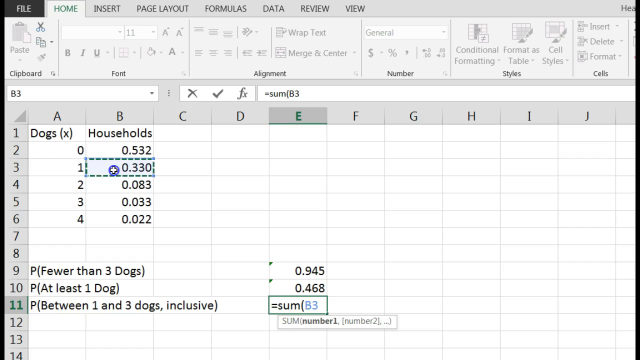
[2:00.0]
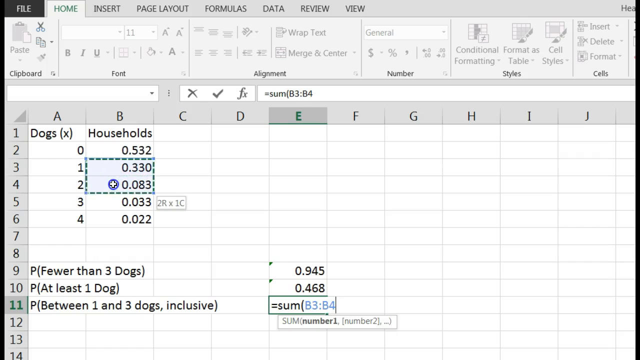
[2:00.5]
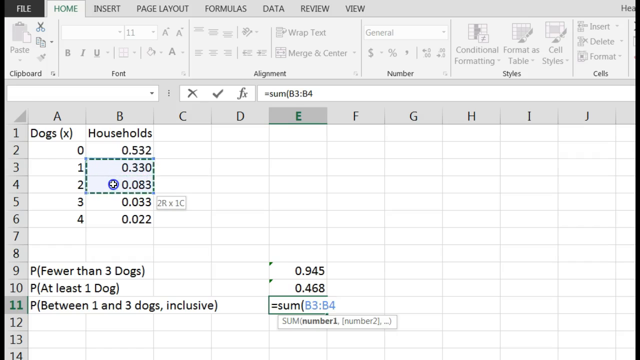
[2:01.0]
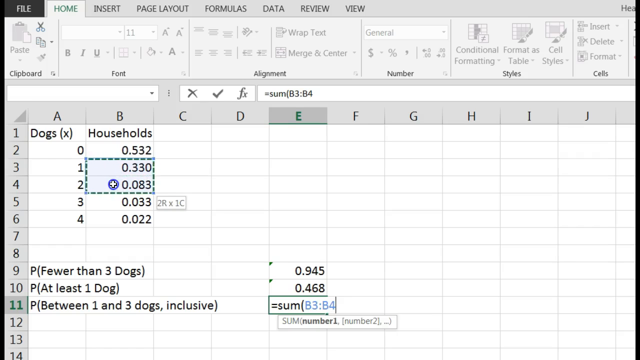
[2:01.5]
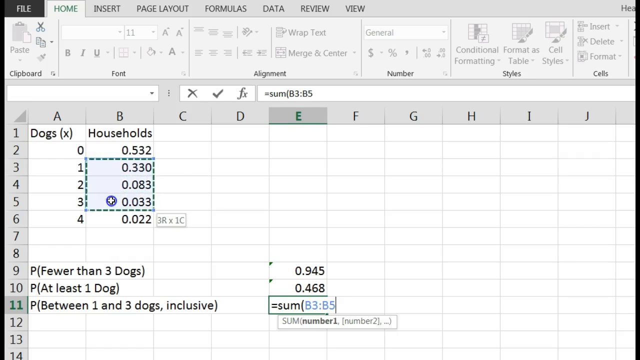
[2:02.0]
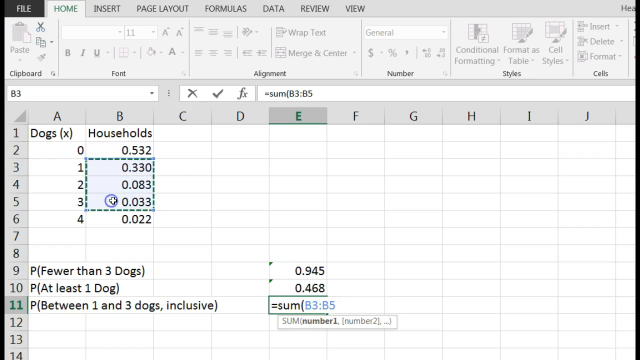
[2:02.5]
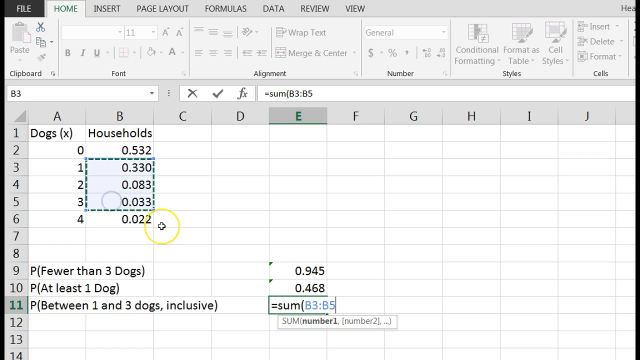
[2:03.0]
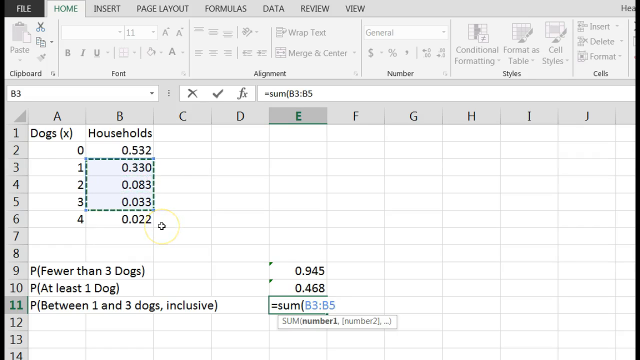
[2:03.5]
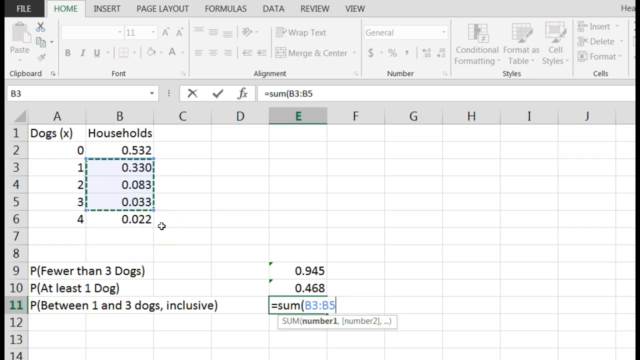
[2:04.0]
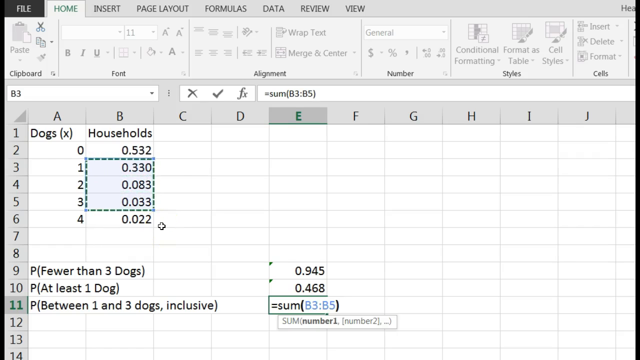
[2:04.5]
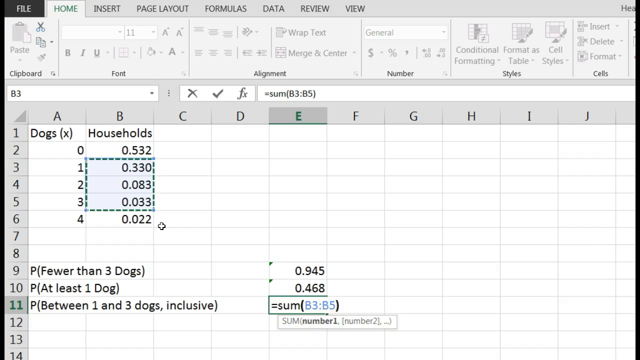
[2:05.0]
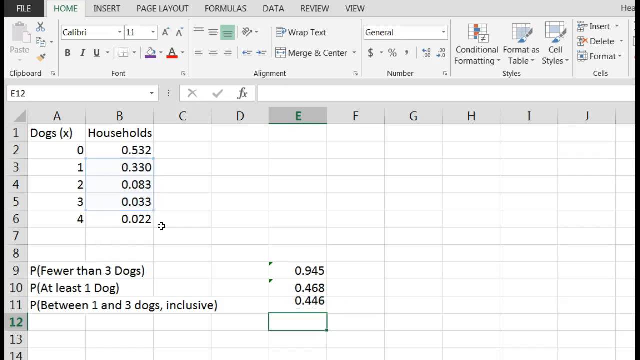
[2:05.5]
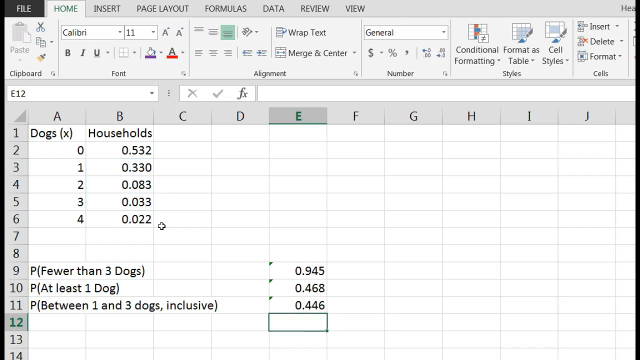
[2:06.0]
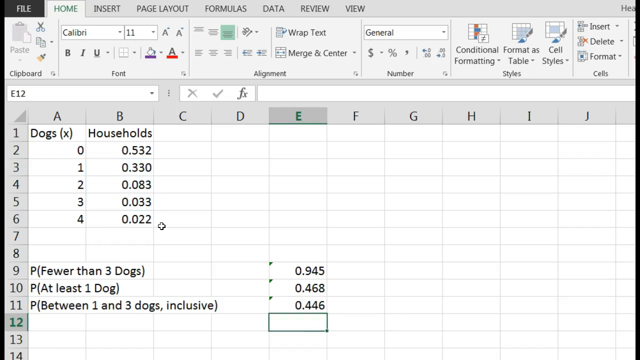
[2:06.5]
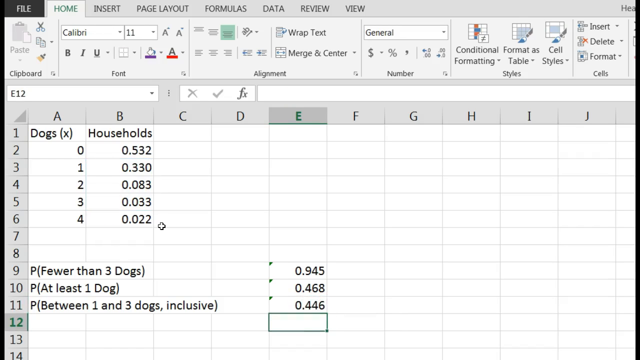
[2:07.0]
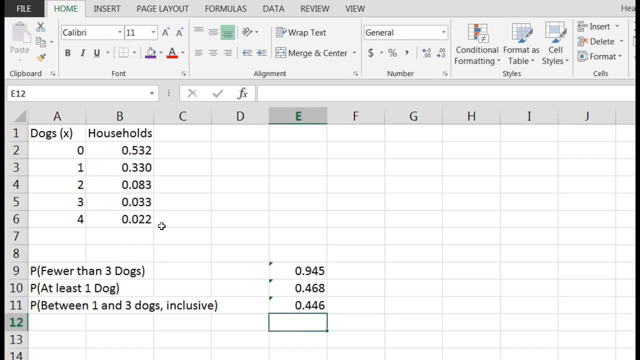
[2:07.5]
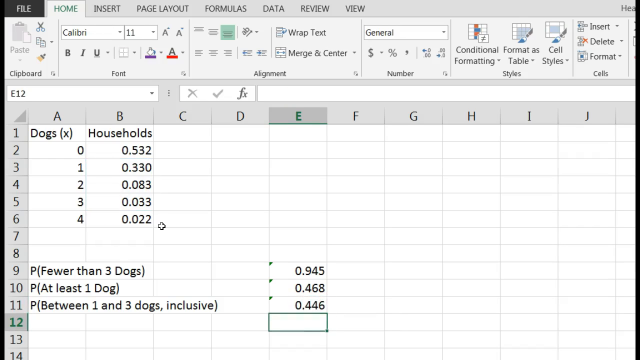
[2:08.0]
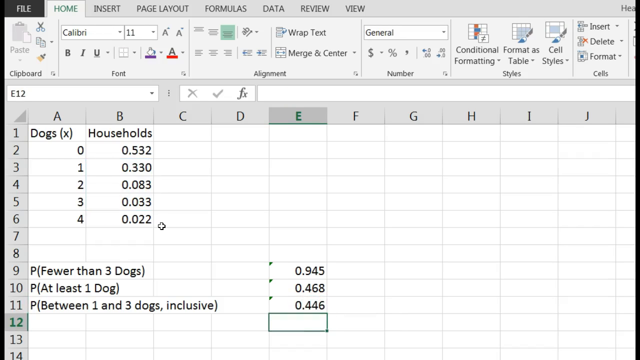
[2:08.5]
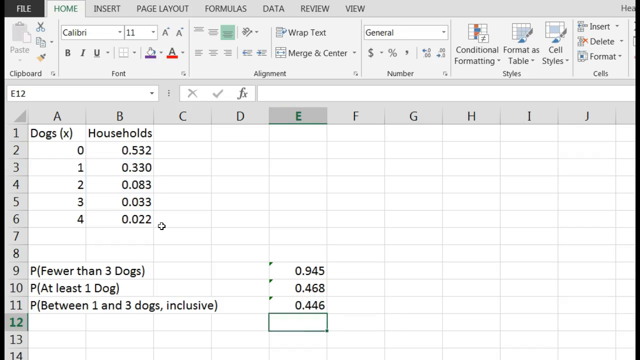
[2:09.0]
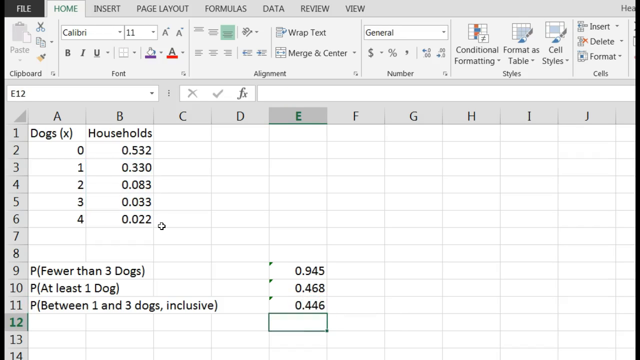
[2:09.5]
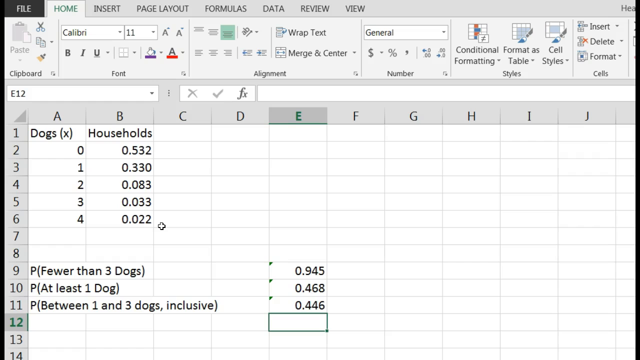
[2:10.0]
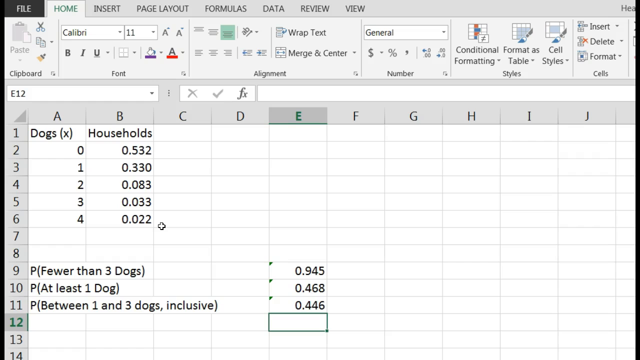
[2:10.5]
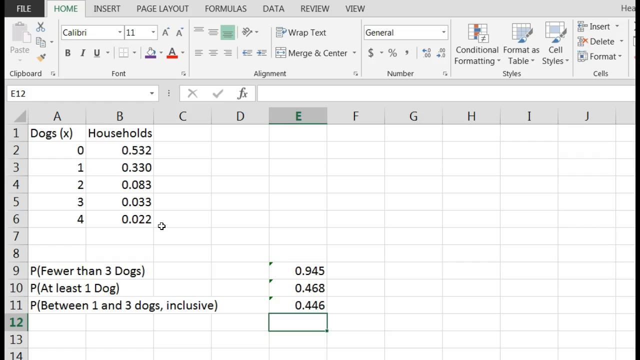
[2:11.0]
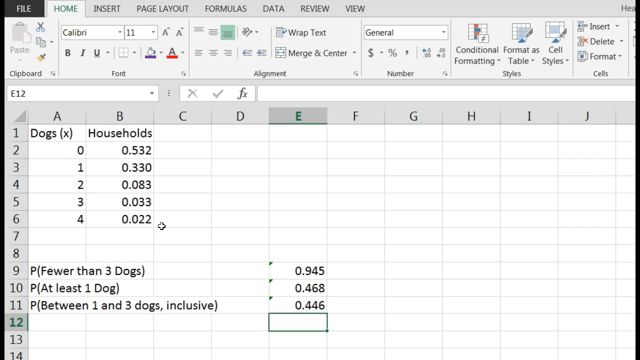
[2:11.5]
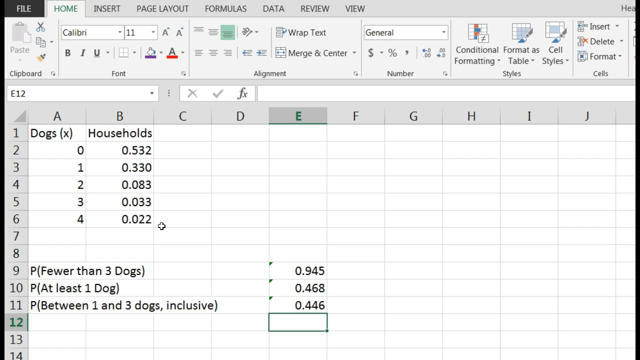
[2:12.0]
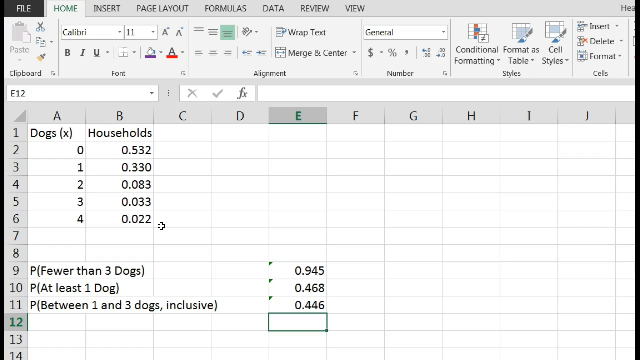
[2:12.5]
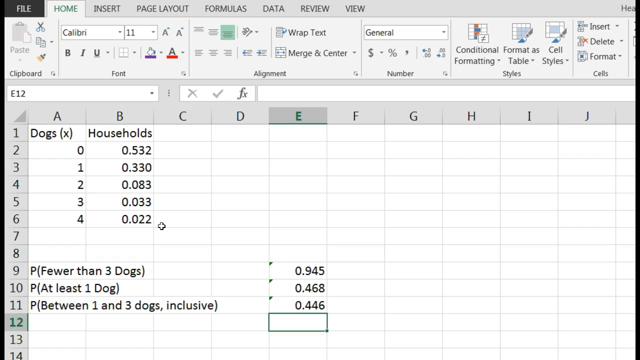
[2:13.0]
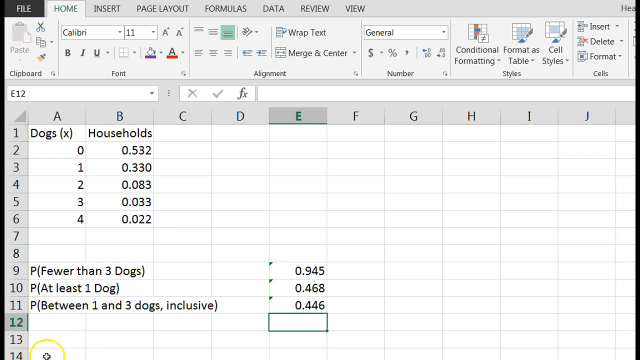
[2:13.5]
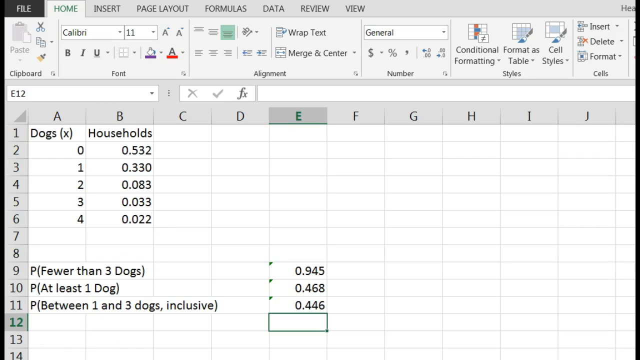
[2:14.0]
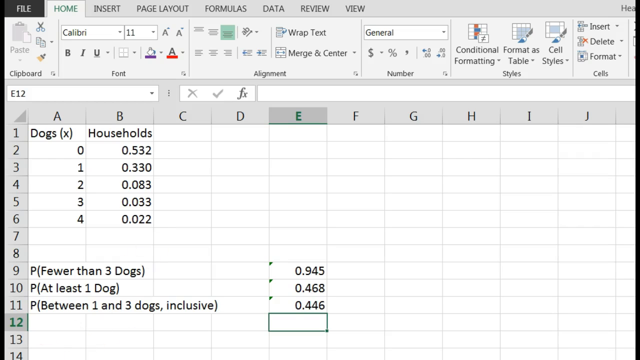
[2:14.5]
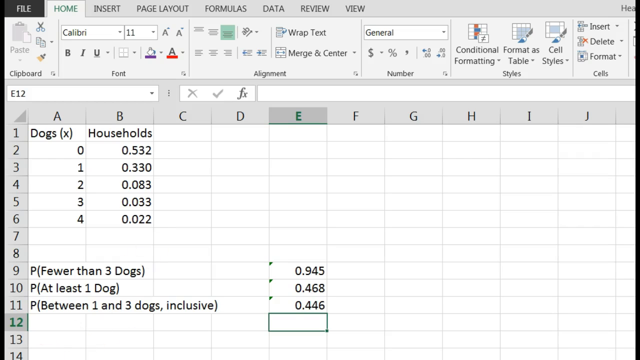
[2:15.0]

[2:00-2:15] The formula now has sum B3 in blue, and dragging over the cells adds B4 and then B5. B3 through B5 have a light blue background, and a green dotted line moves around them in a circle. When the mouse is released, the cell shows 0.446, the total of three cells, as the result for between one and three dogs inclusive. The cell E12 below it has a green border. On the left, the current row header is a darker gray, with a green line running up and down its right edge. The cursor briefly flashes with a yellow circle, which then goes away. Under the formatting options, right underneath the paintbrush on the left side, a box shows the current cell name, such as G2, with a drop-down arrow.